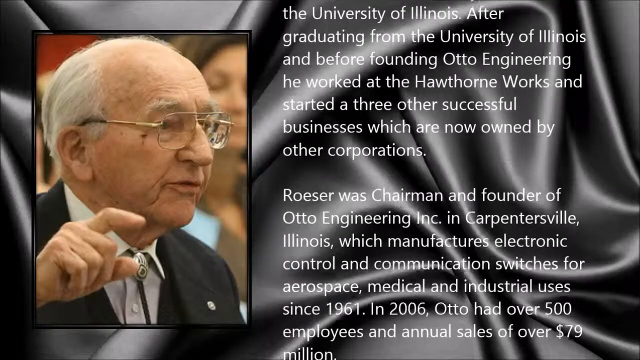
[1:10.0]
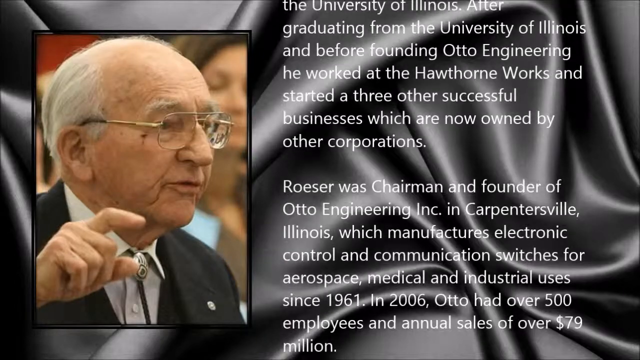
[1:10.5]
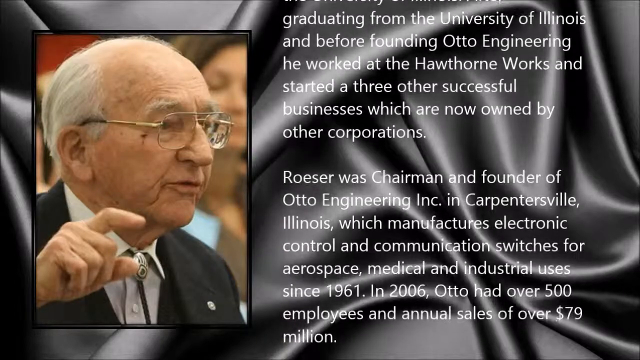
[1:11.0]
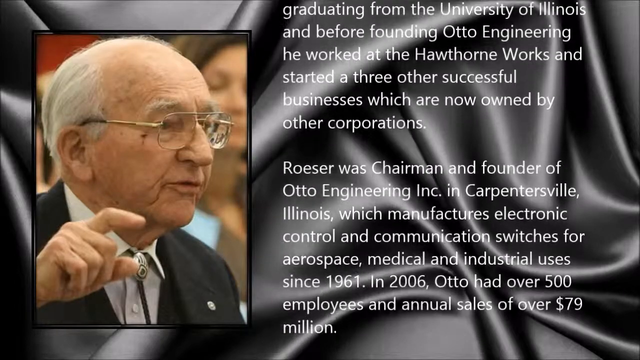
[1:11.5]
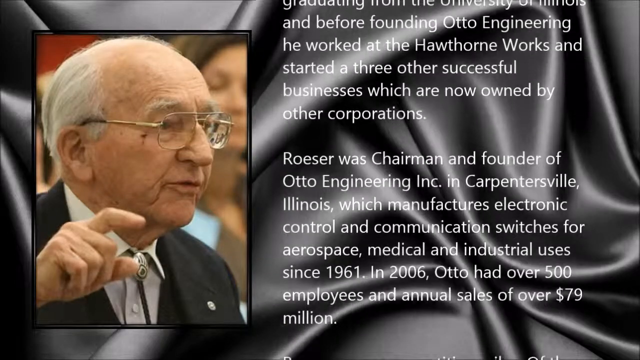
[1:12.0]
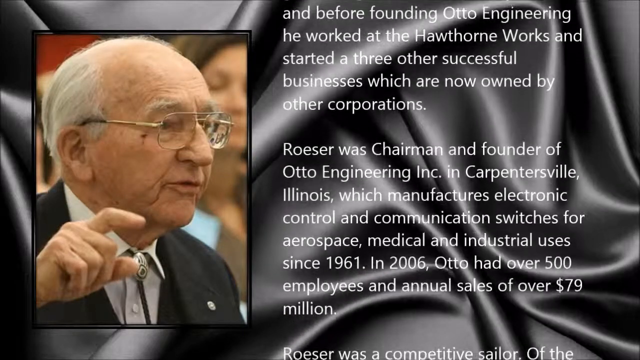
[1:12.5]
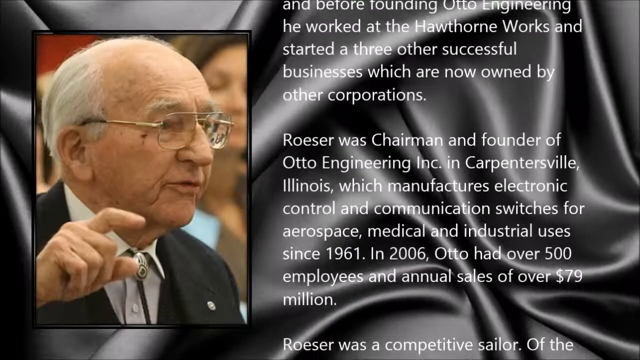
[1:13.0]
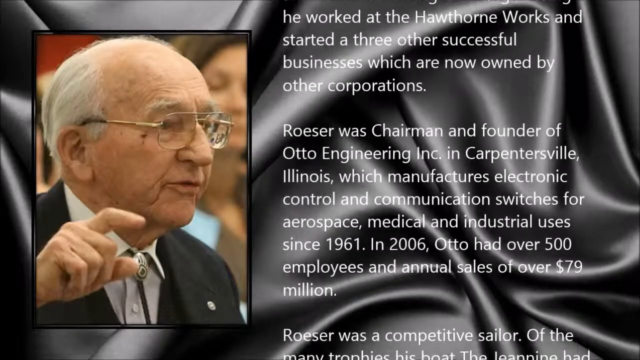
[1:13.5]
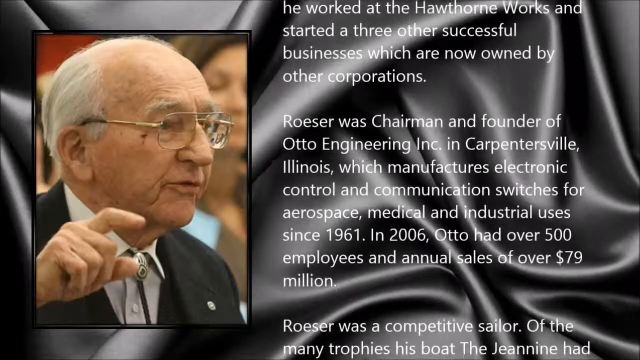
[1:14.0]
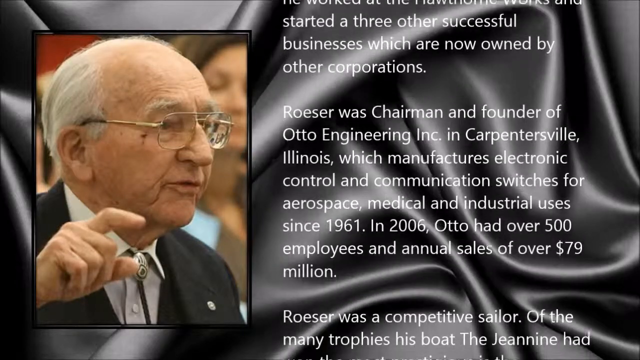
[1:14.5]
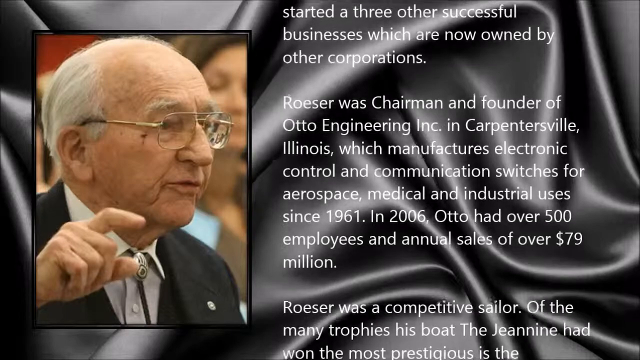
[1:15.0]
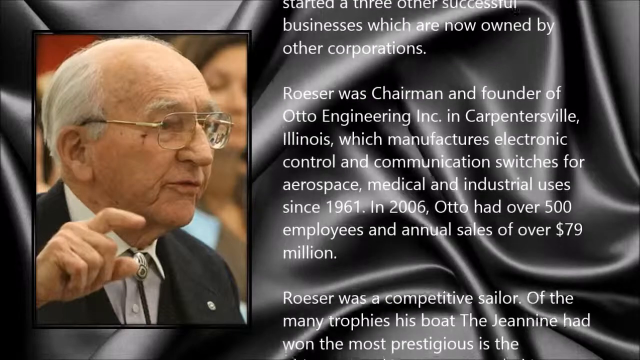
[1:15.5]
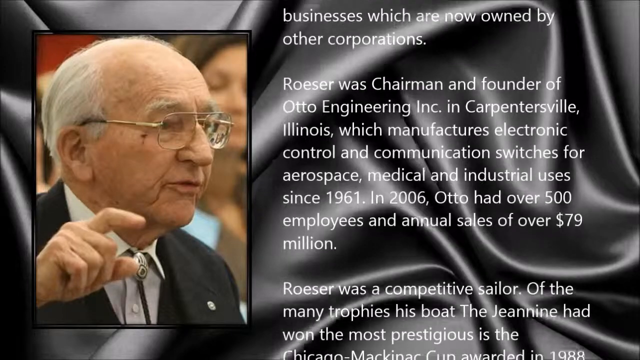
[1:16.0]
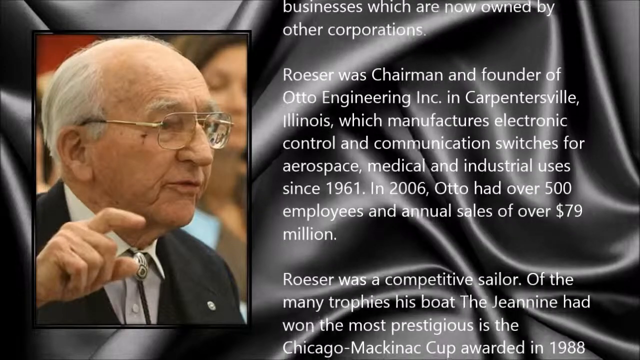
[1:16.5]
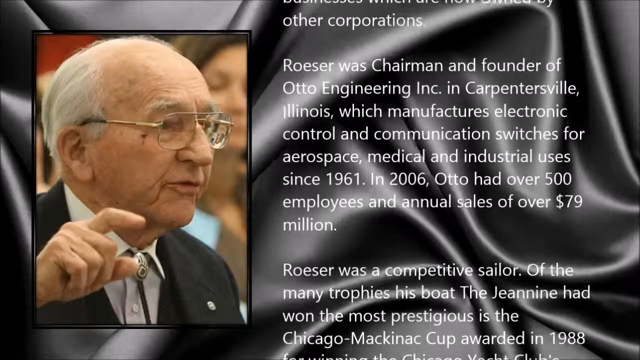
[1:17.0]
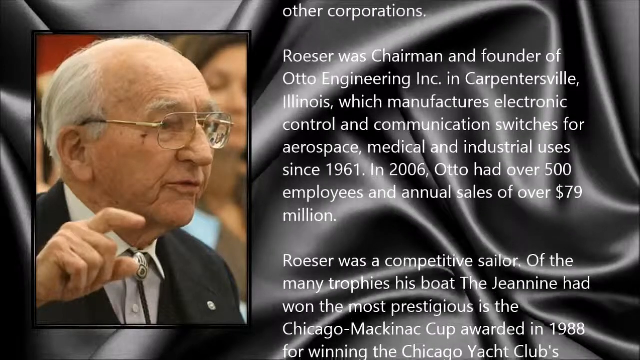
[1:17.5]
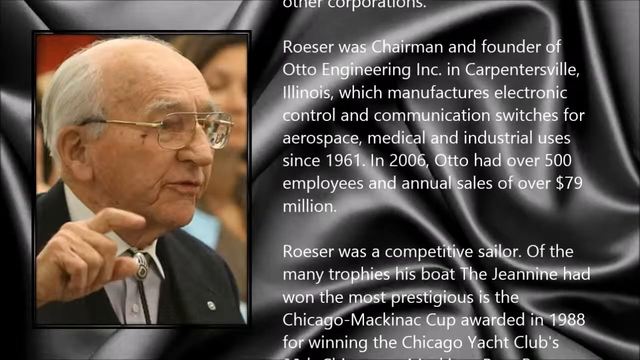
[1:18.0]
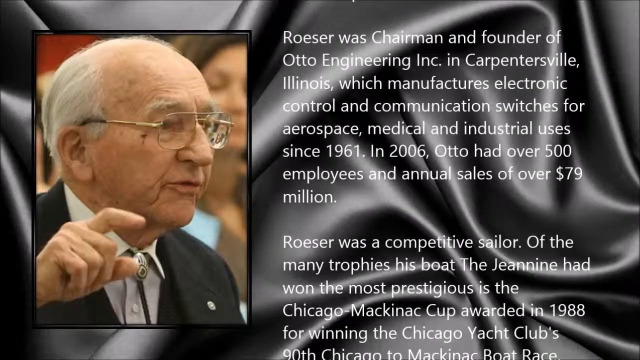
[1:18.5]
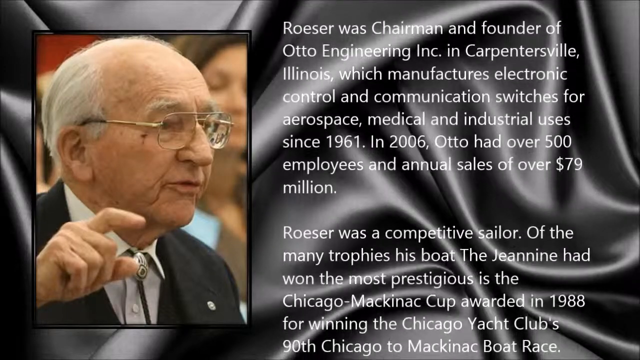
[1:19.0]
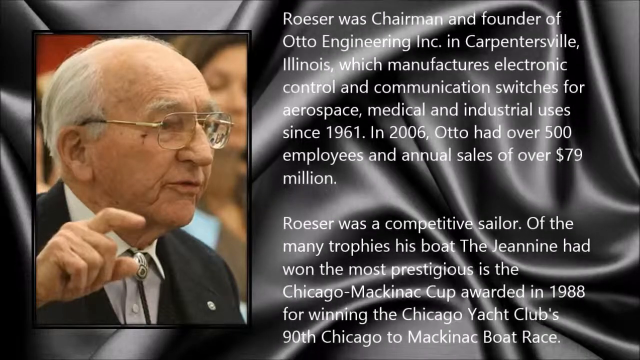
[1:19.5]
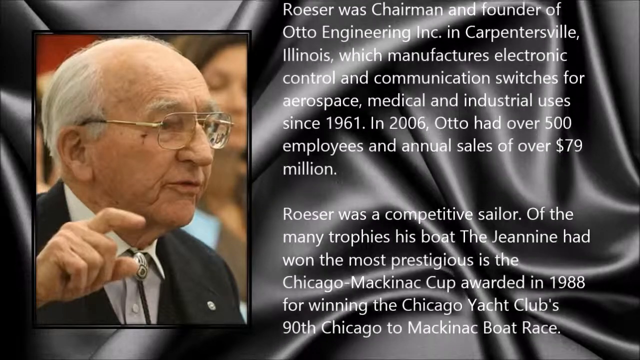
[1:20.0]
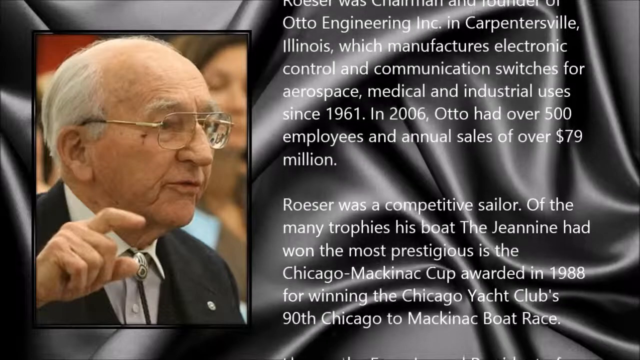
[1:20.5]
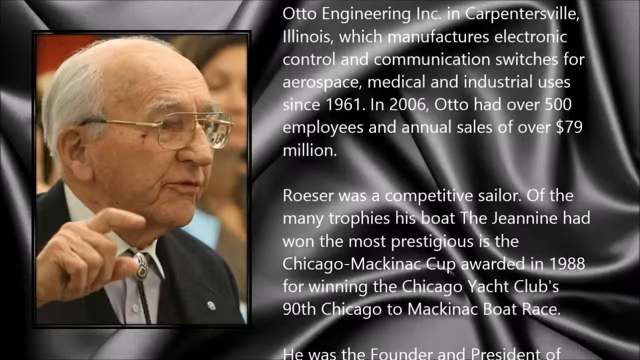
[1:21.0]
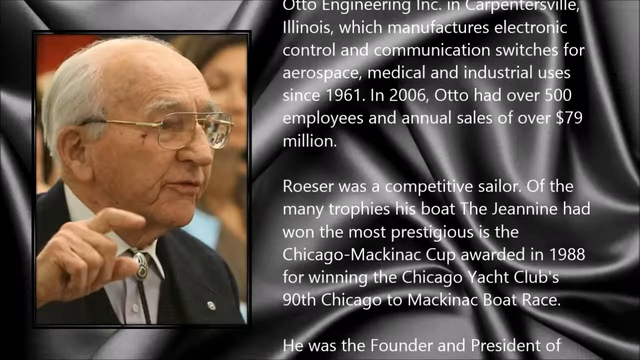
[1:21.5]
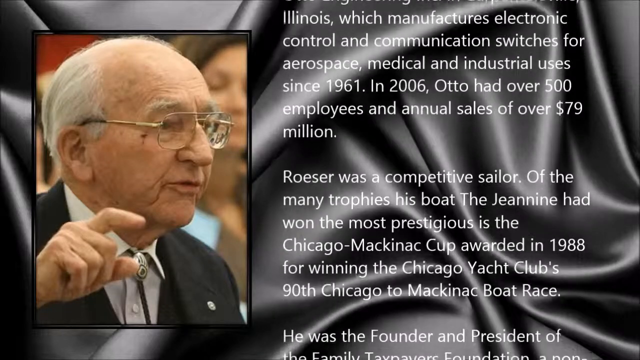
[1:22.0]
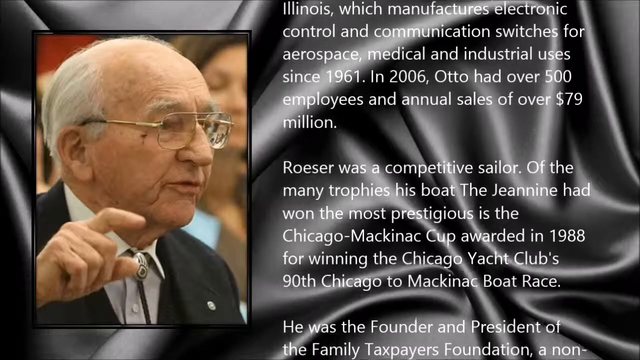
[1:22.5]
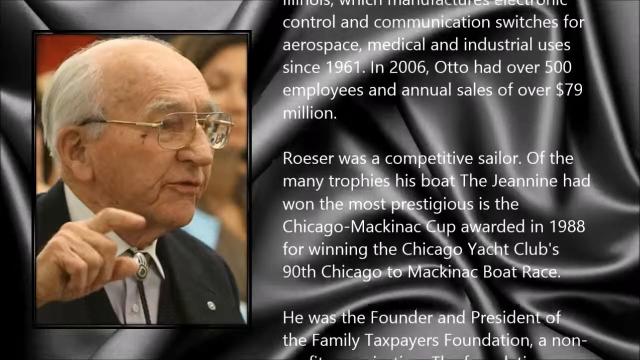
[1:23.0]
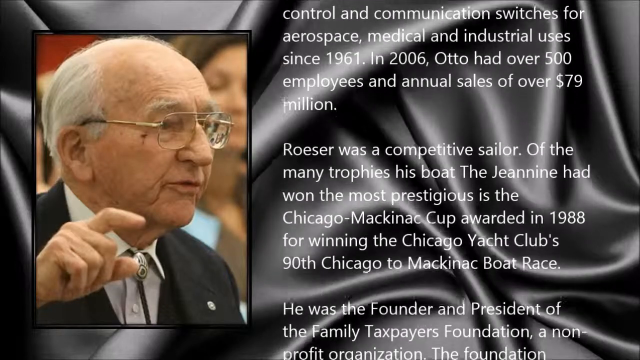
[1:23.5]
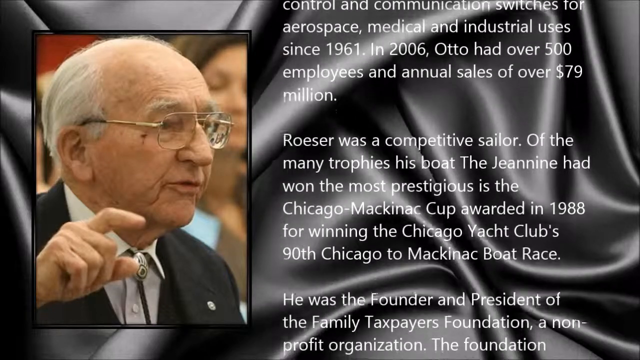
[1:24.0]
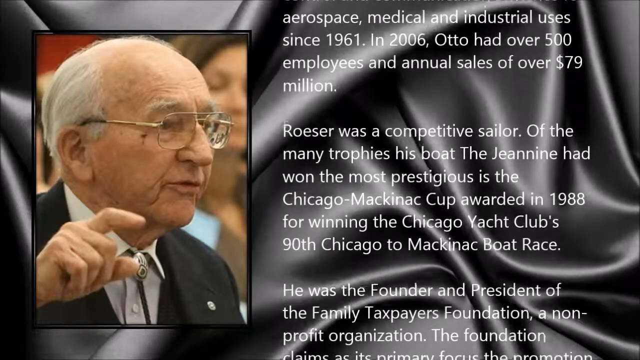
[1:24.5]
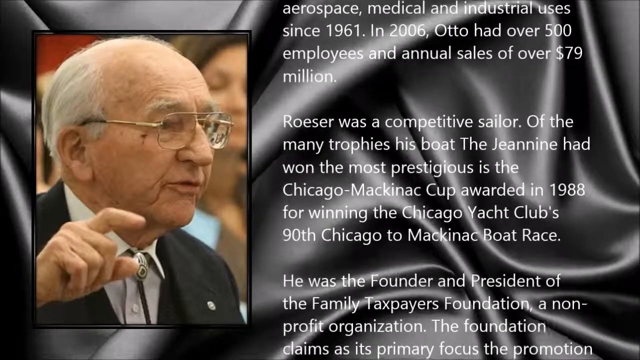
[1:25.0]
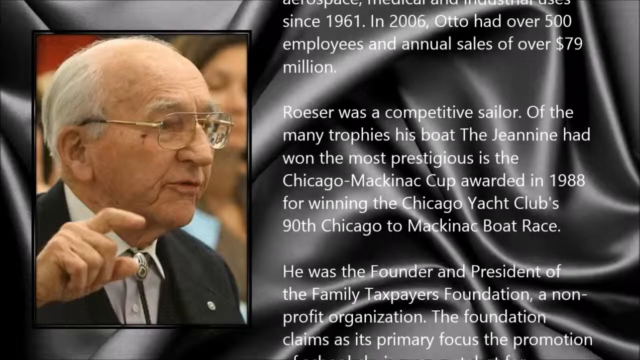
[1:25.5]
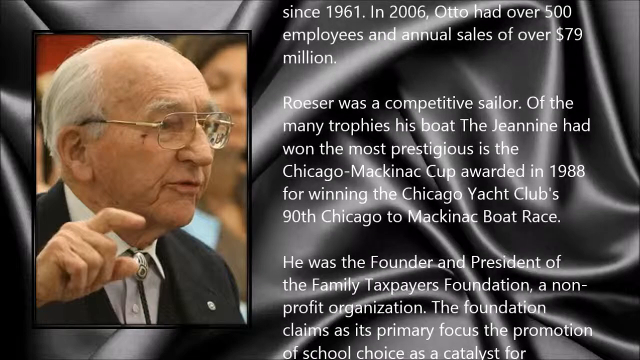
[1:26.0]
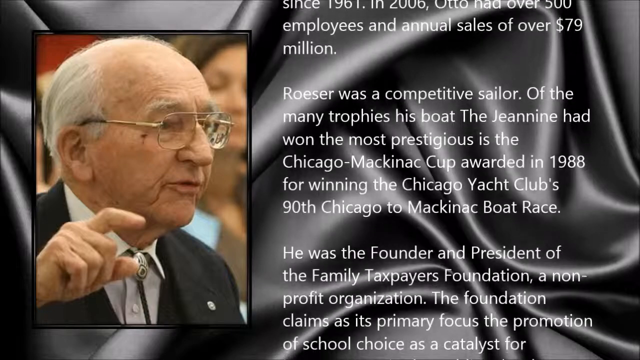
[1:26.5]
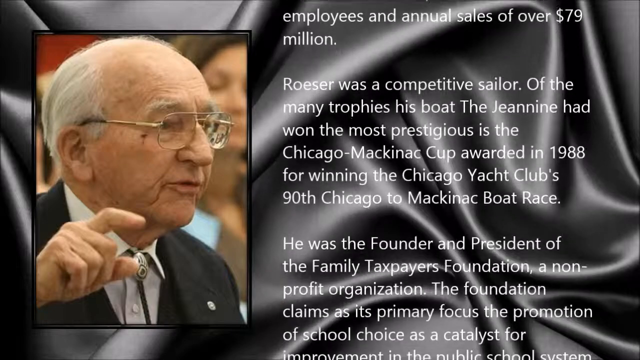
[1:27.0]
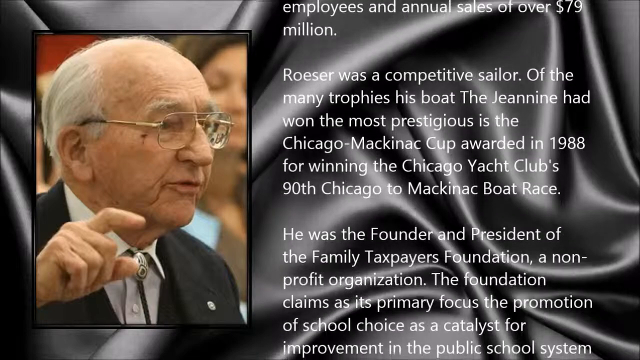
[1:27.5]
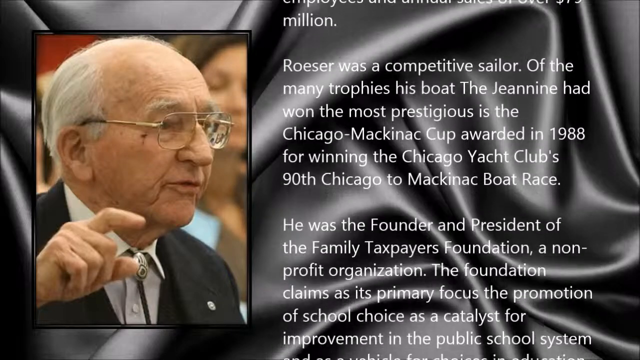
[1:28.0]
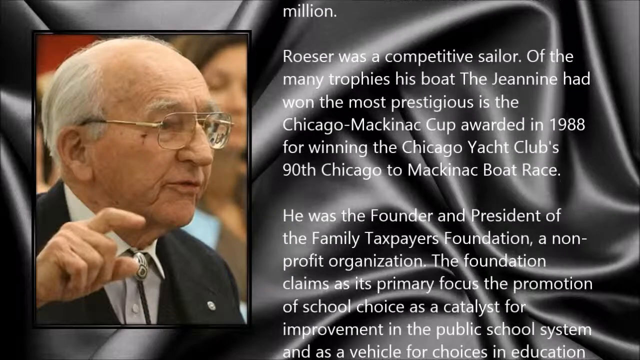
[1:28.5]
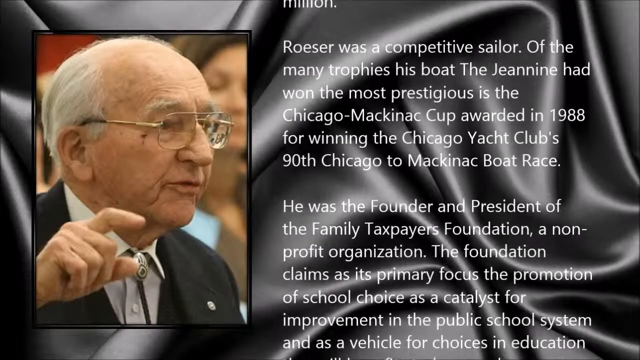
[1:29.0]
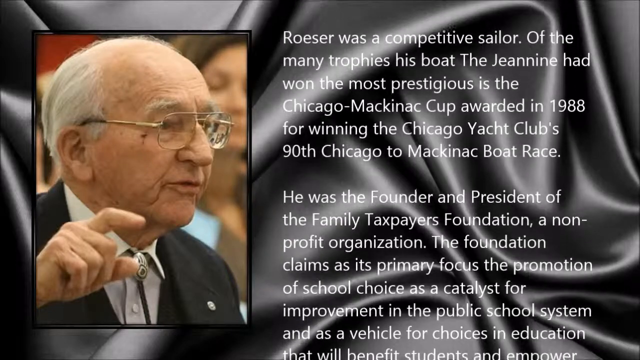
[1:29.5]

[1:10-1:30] The same picture remains on the left side of the screen, while on the right white text scrolls up against the gray silk background, reading: "In 2006, Otto had over 500 employees and annual sales of over $79 million. Roser was a competitive sailor. Of the many trophies his boat, the Janine, had won, the most prestigious is the Chicago Mackinac Cup, awarded in 1988 for winning the Chicago Yacht Club's 90th Chicago to Mackinac Boat Race. He was the founder and president of the Family Taxpayers Foundation, a non-profit organization. The foundation claims as its primary focus the promotion of school choice as a catalyst for improvement in the public school system and as a vehicle for choices in education that will benefit students and empower parents." The text stays very readable over the dark background.